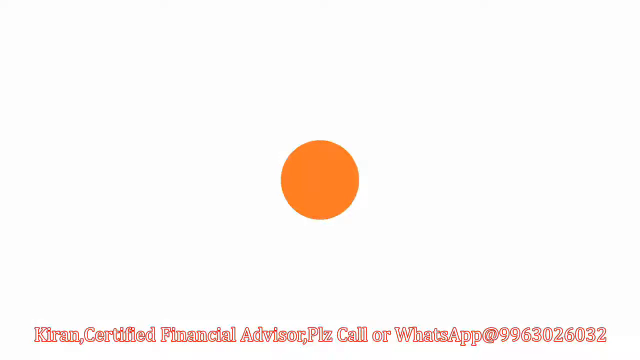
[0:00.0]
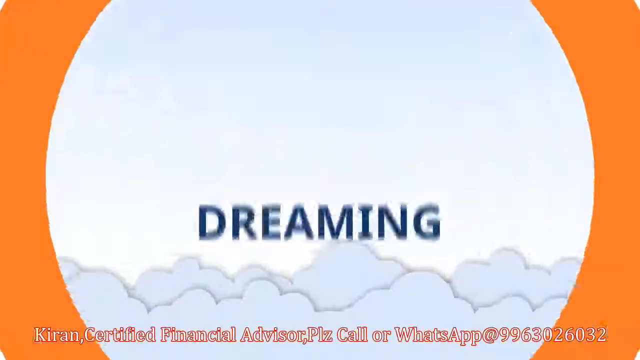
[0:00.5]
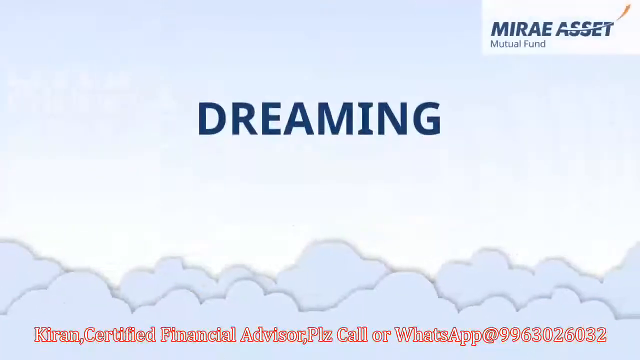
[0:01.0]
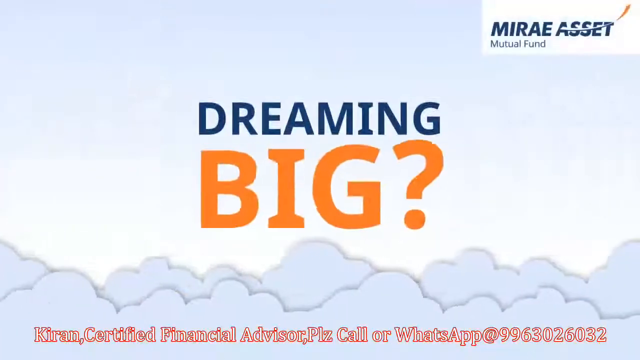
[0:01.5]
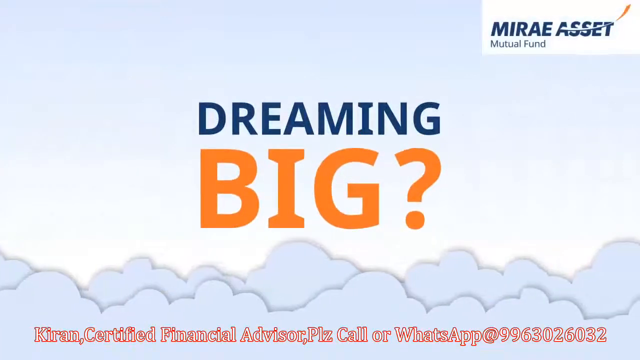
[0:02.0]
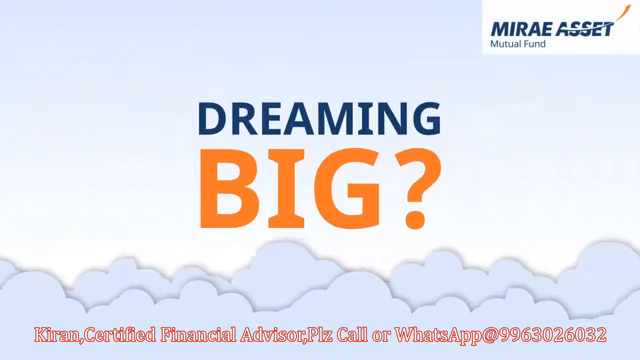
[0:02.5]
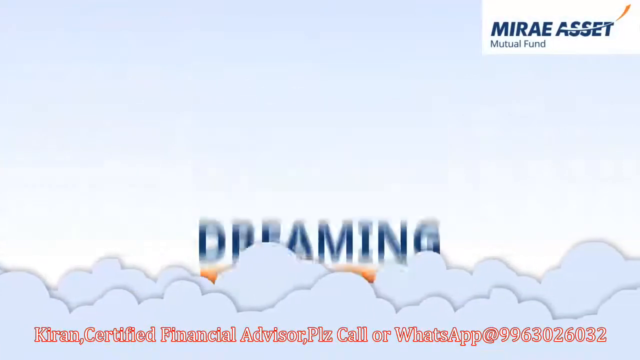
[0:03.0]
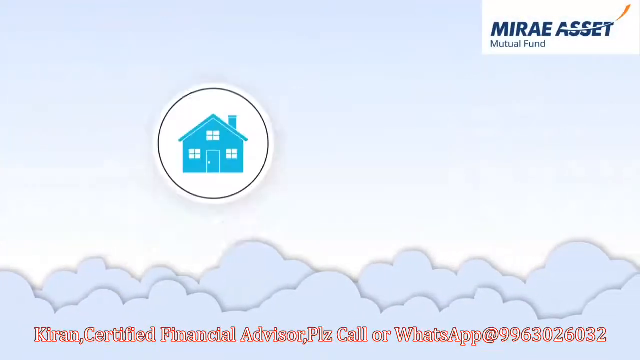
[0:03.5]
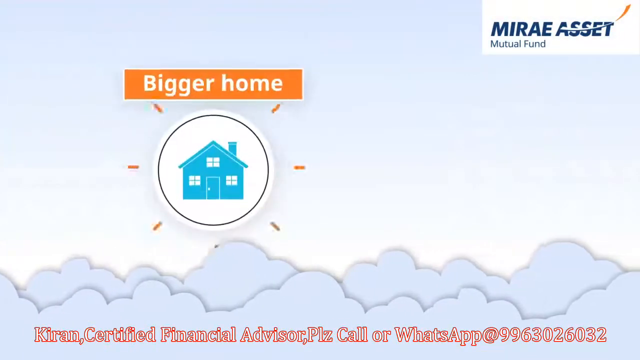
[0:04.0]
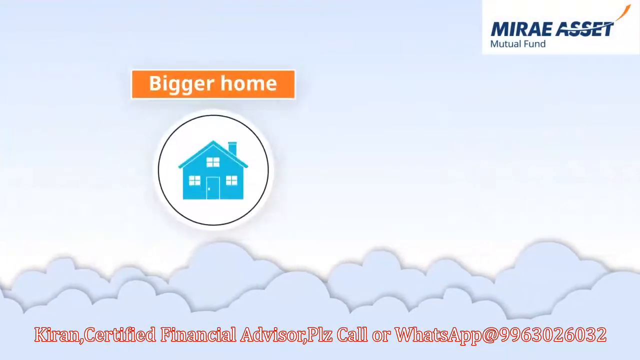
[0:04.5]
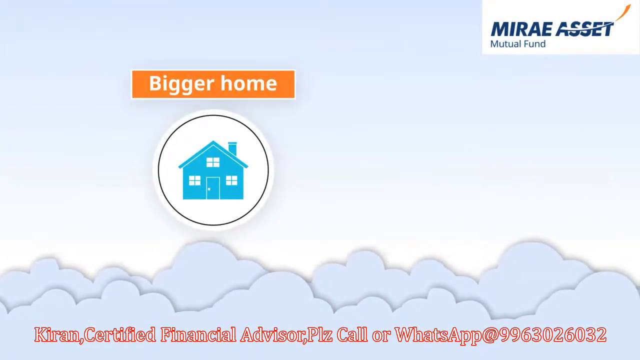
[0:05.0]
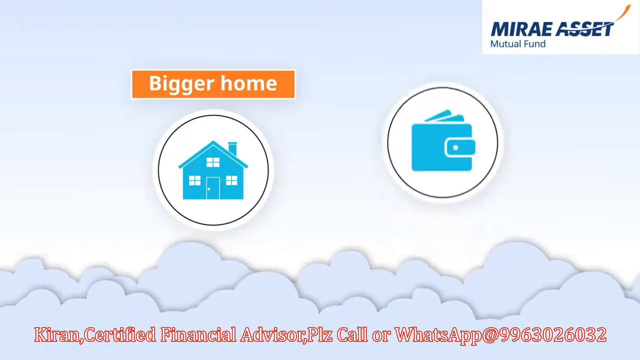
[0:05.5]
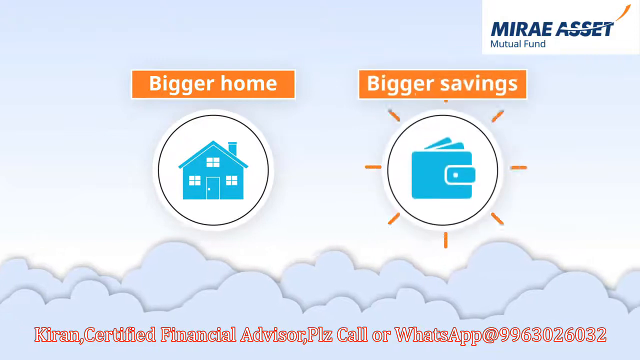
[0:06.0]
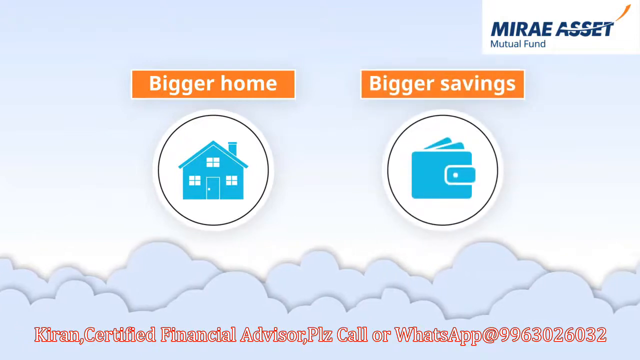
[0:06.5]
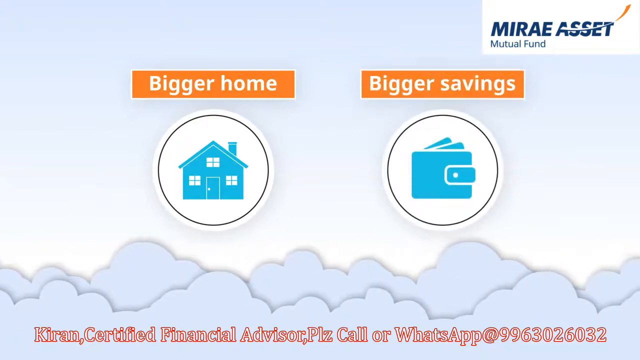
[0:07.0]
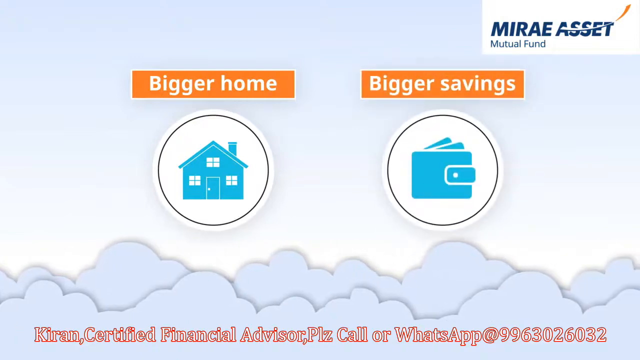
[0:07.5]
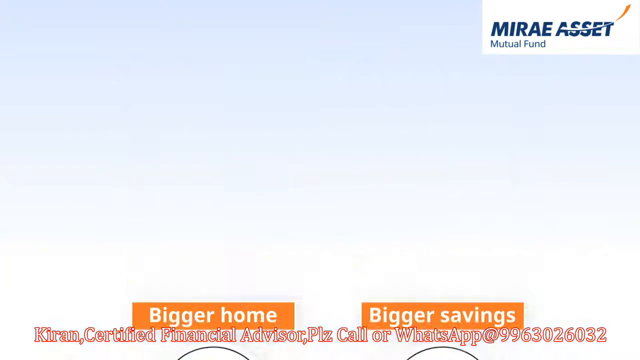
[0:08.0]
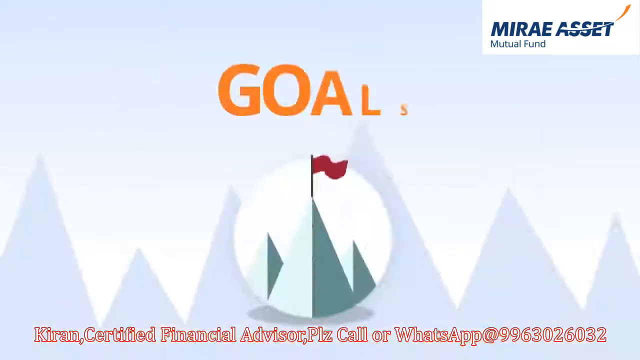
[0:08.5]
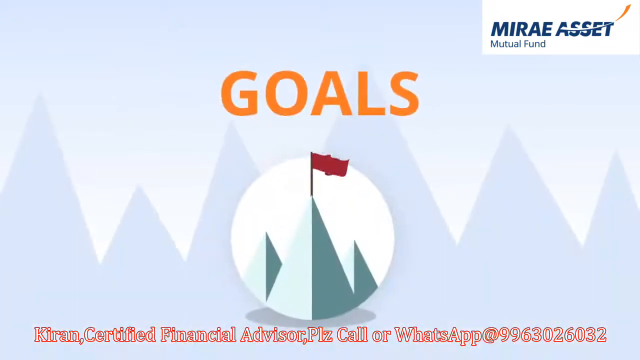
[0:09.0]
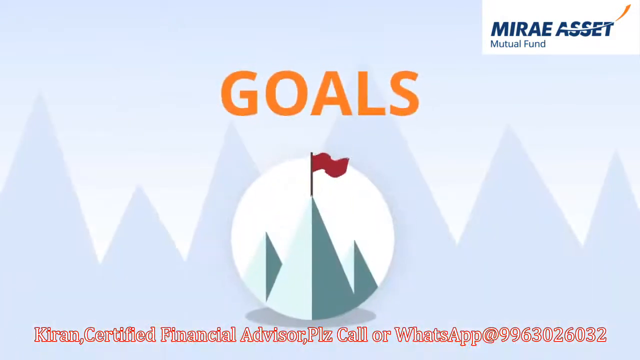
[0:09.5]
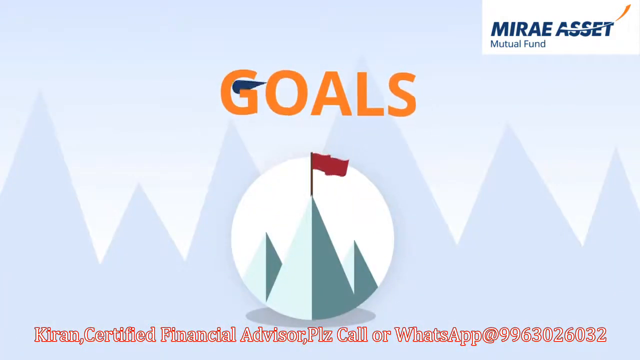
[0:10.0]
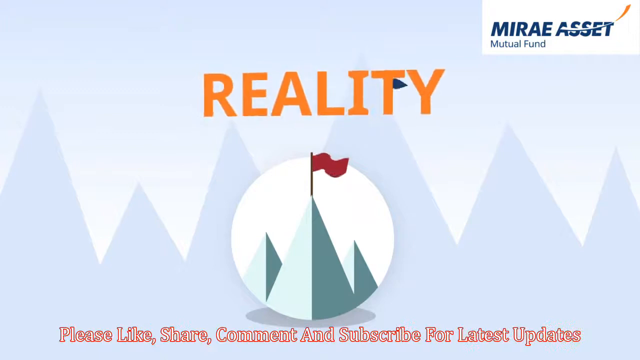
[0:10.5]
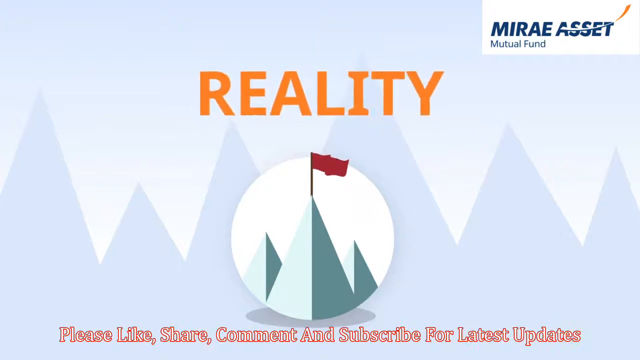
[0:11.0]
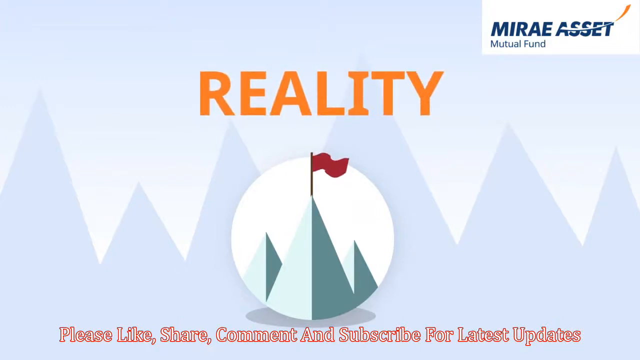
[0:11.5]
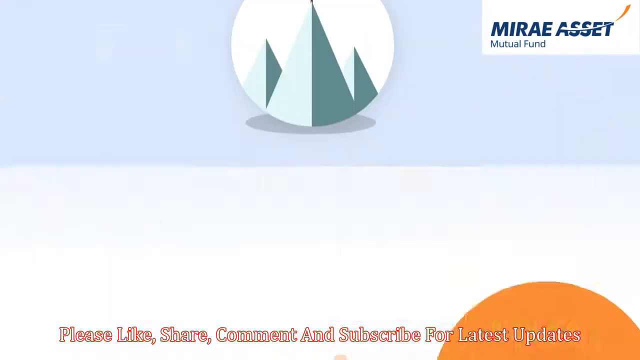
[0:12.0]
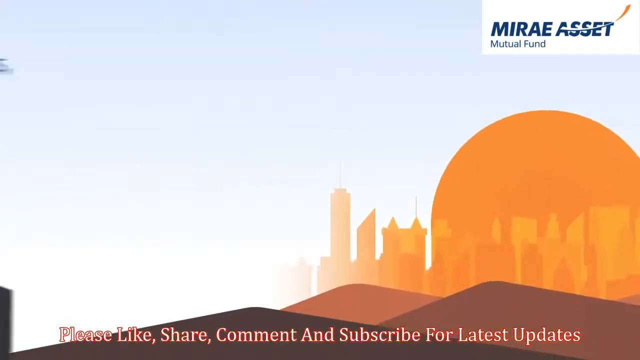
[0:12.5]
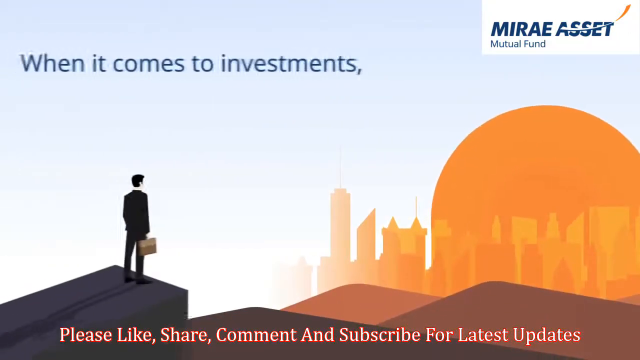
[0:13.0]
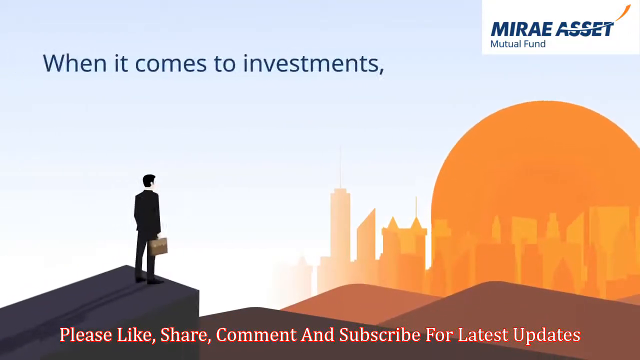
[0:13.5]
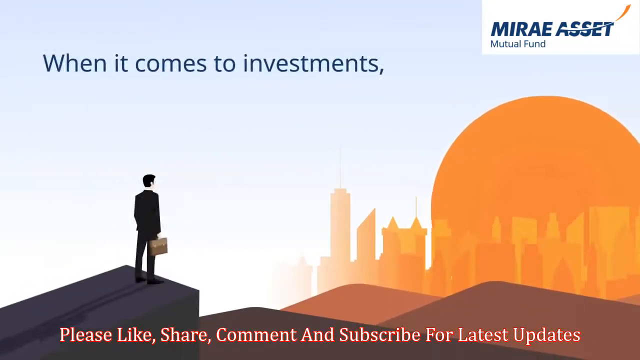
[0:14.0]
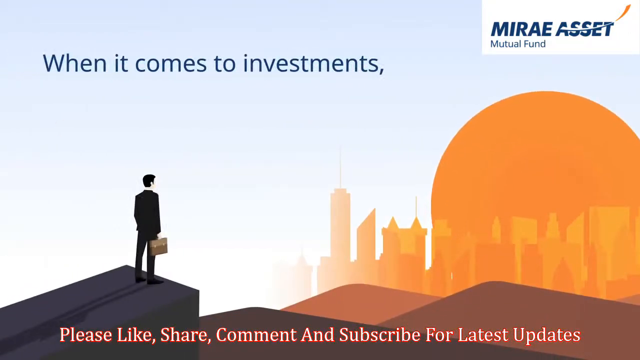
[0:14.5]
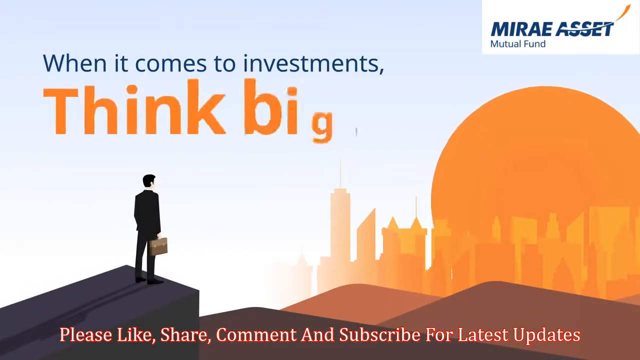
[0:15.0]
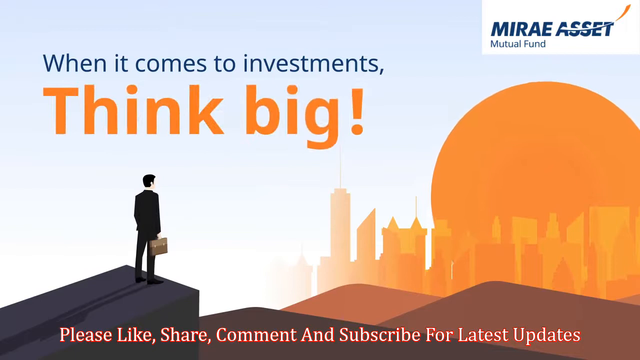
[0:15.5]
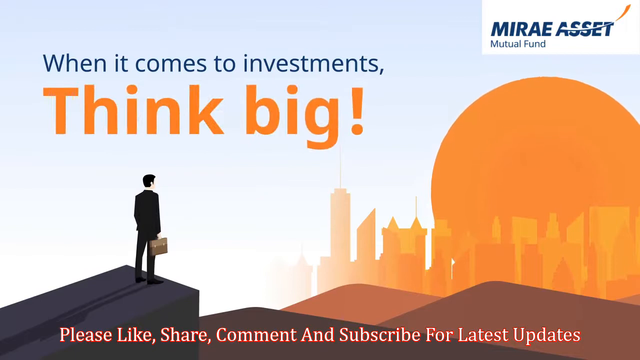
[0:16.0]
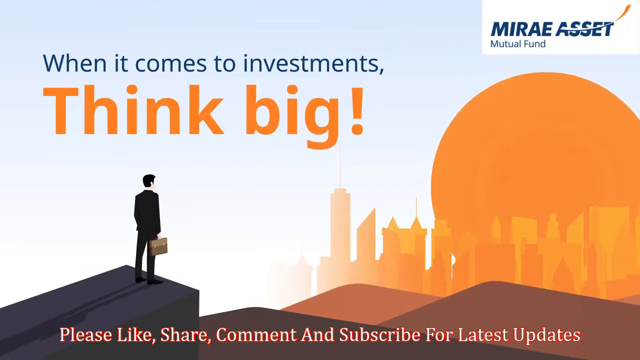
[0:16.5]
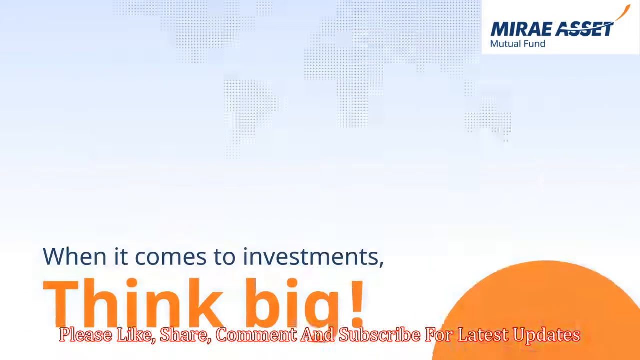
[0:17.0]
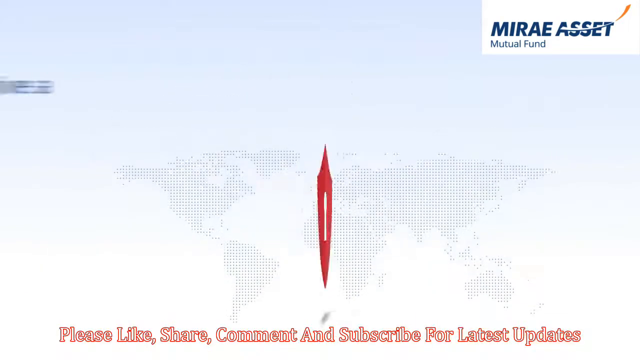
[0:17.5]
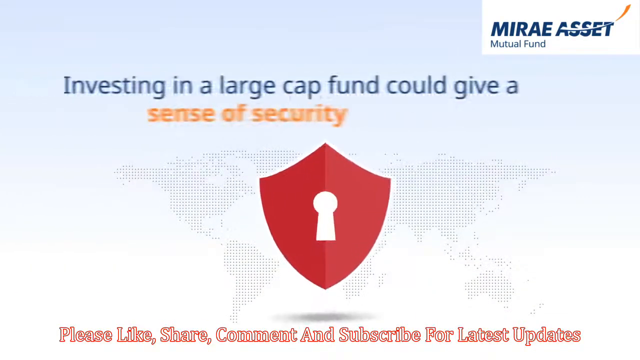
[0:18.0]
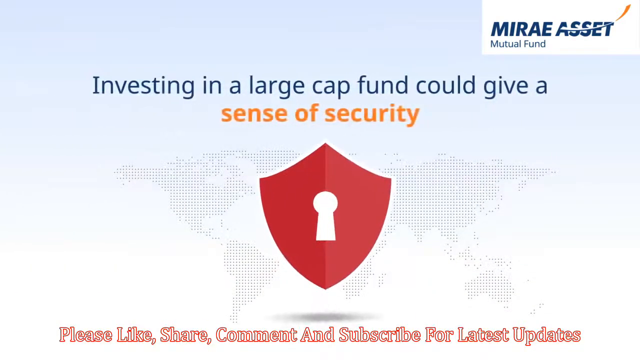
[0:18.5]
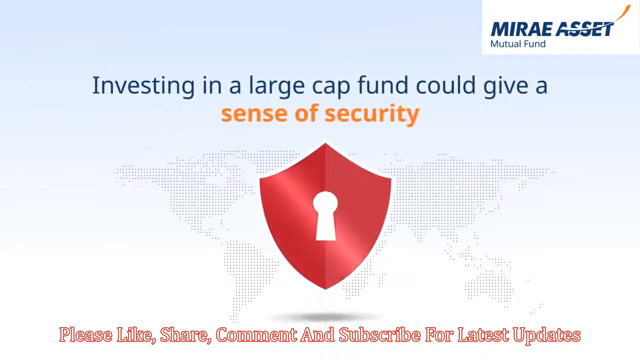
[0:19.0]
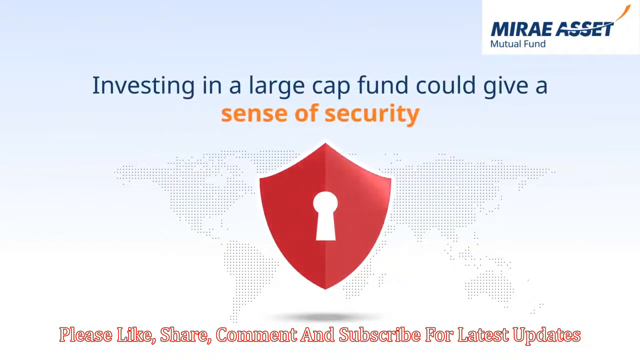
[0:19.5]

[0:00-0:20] On a white background, an orange circle in the middle comes forward and bursts into large lettering: the word "dreaming" in blue and, in an even larger font, the word "big" in orange. The screen seems to move to the left as if in action, and once the movement starts, apparently two layers of clouds appear at the bottom. In the top right-hand corner is "Mireie Asset" in blue lettering, with "mutual fund" in smaller blue lettering underneath. An orange banner pops up reading "bigger home" in white lettering, and below it is a white circular icon with a black outline showing a blue house. Another icon pops up with "bigger savings" in white text on an orange banner, above a white circle with a black outline showing what appears to be a blue wallet. The screen continues to move, and the words "goals" and "reality" flash in orange lettering, with new icons replacing the old ones; one circle shows a mountain with a red flag on top. The next screen reads "when it comes to investments" in blue lettering above "Think Big" in orange. Then a man with a briefcase looks at a sun in the far right corner. The final screen shows an investing reminder reading "investing in a large cap fund could give you a sense of security", with "sense of security" in orange lettering.